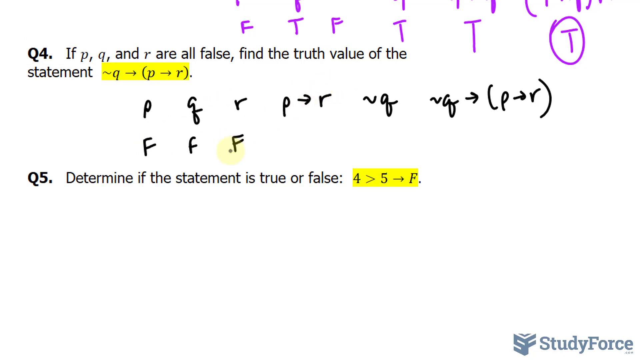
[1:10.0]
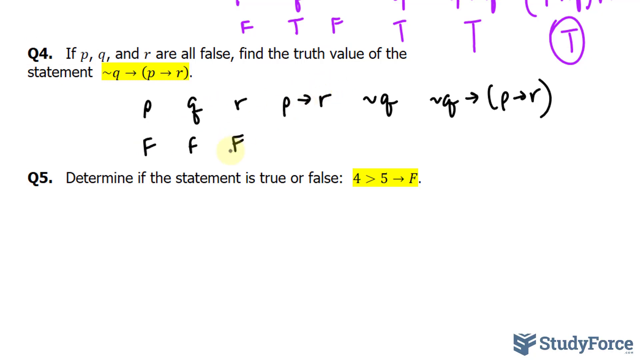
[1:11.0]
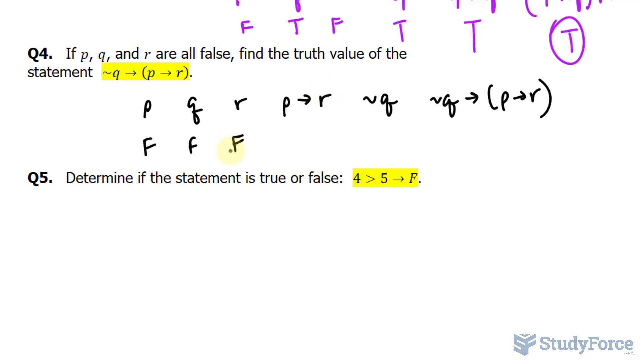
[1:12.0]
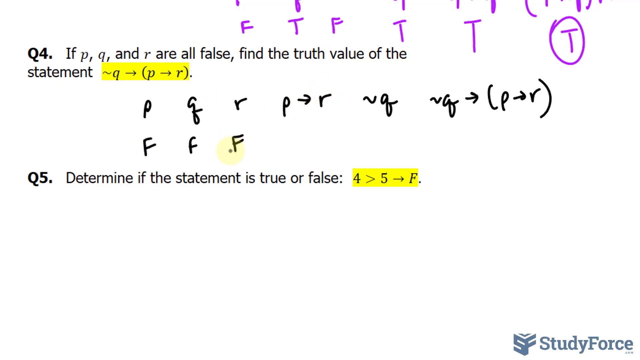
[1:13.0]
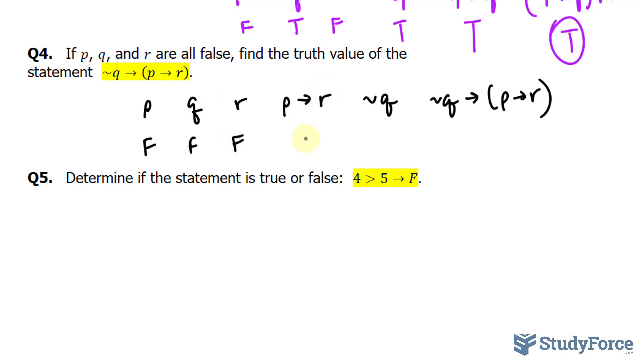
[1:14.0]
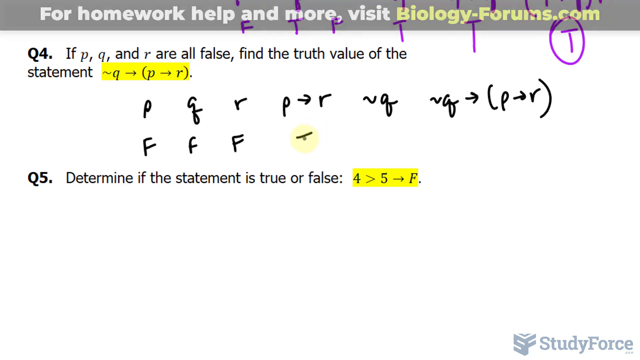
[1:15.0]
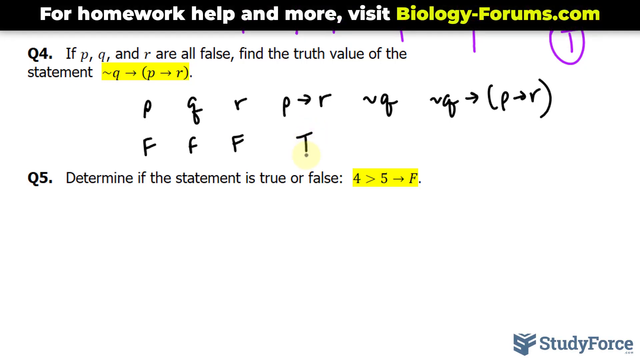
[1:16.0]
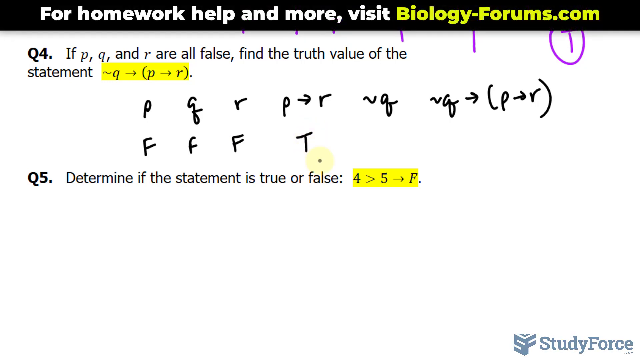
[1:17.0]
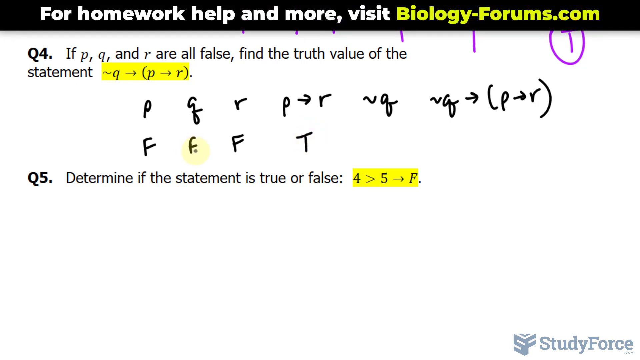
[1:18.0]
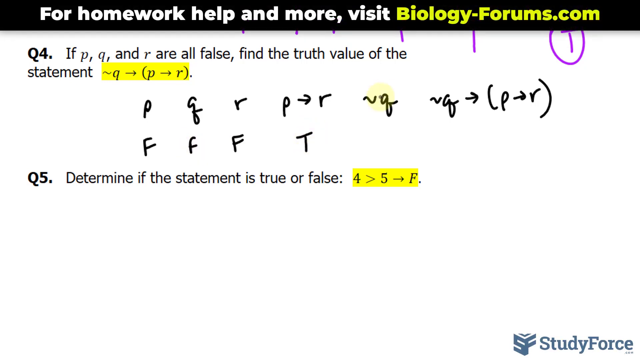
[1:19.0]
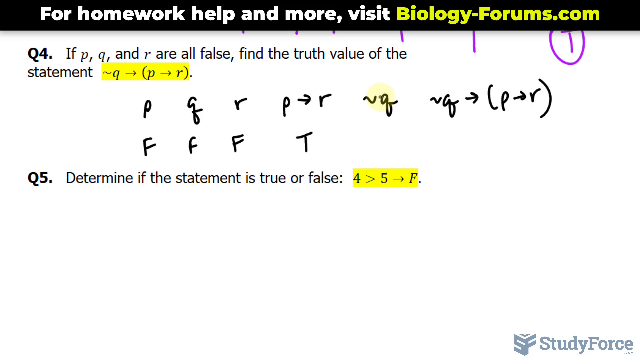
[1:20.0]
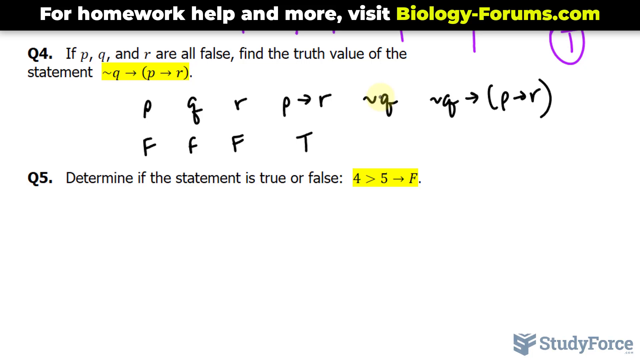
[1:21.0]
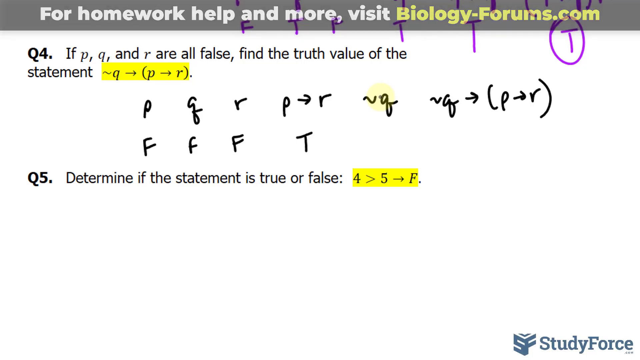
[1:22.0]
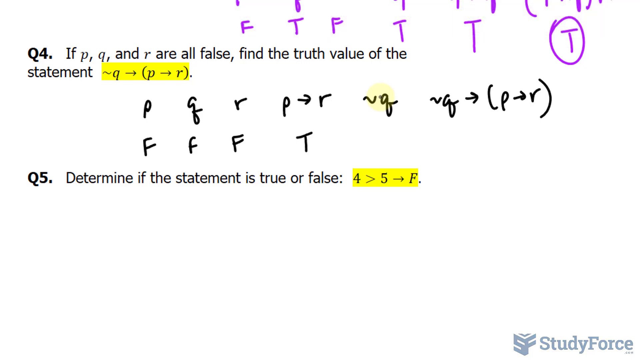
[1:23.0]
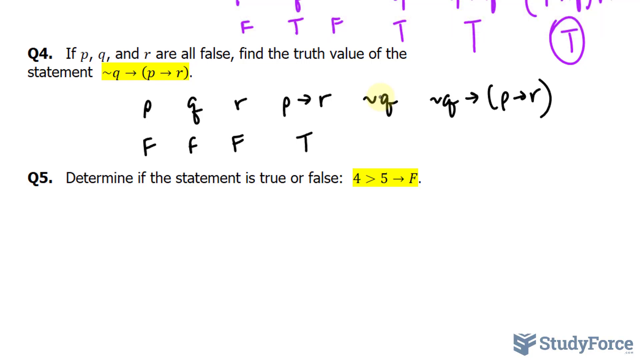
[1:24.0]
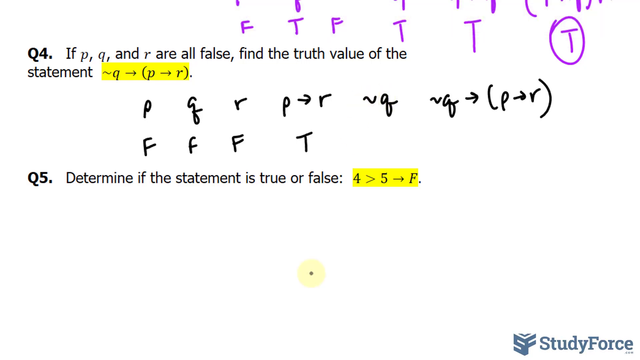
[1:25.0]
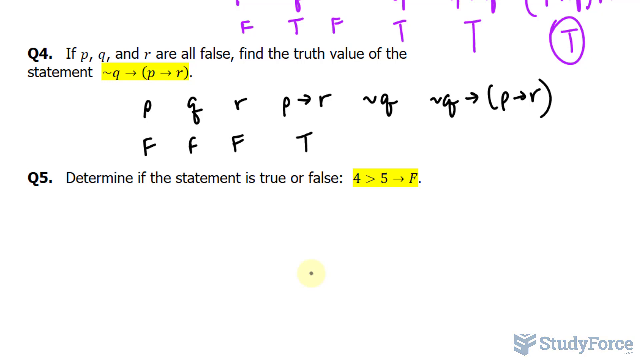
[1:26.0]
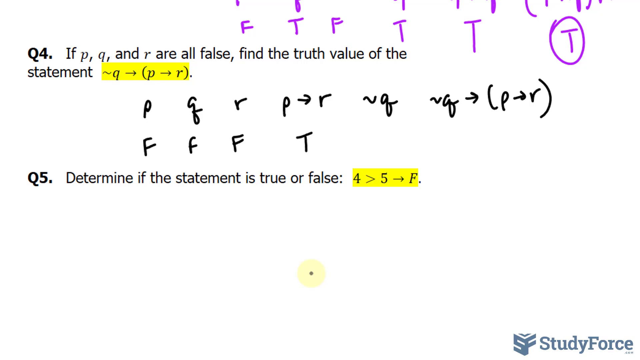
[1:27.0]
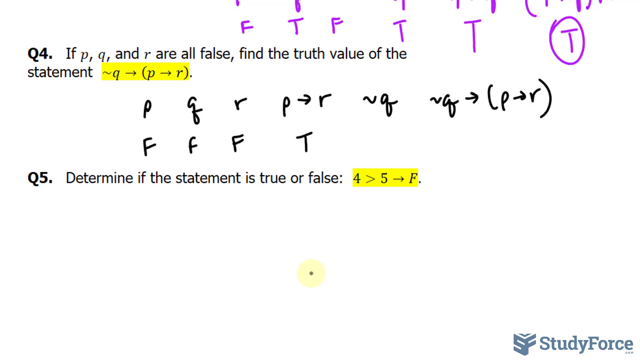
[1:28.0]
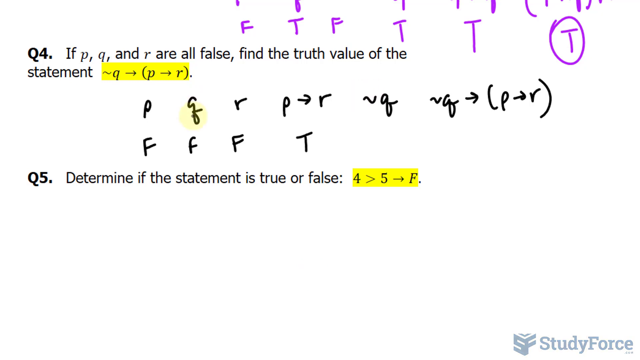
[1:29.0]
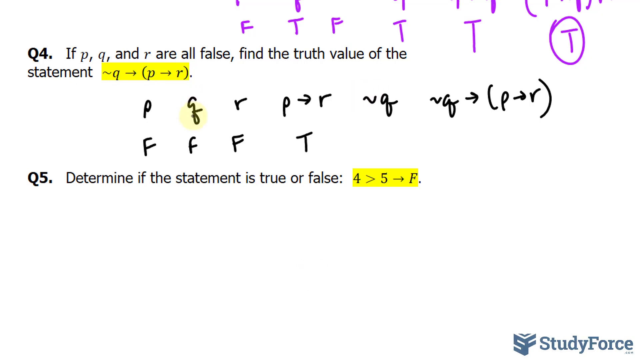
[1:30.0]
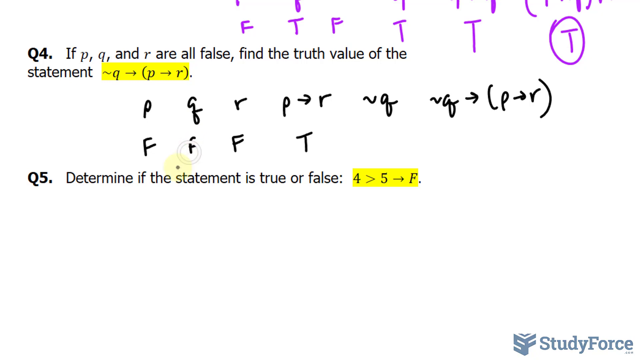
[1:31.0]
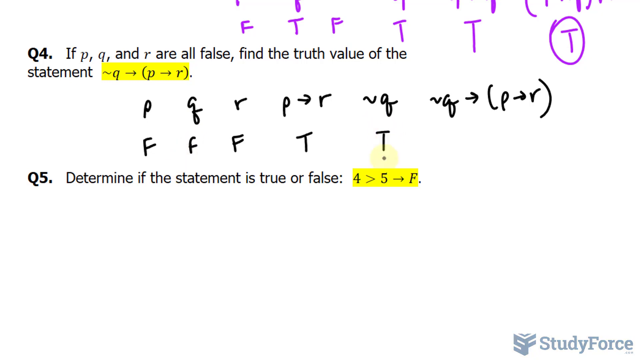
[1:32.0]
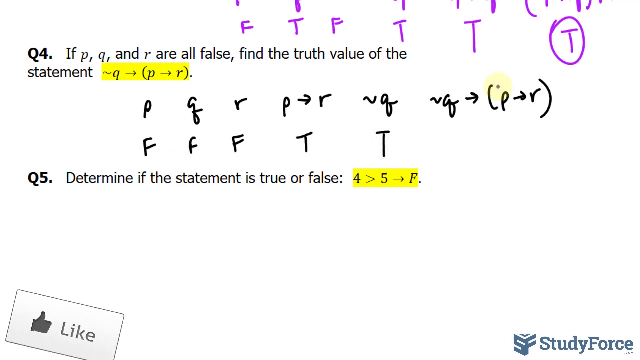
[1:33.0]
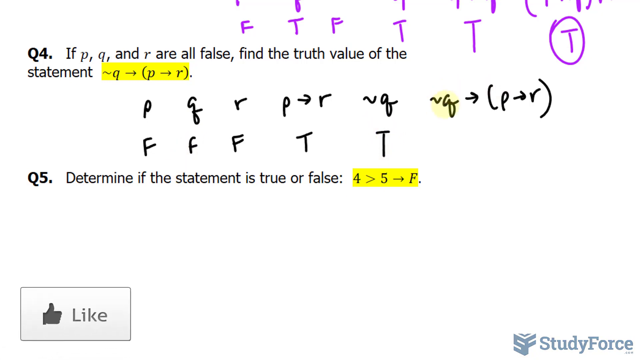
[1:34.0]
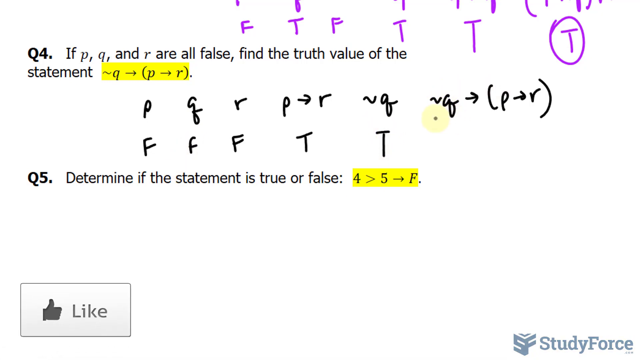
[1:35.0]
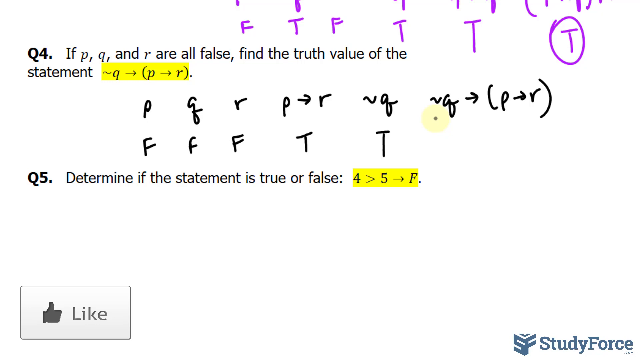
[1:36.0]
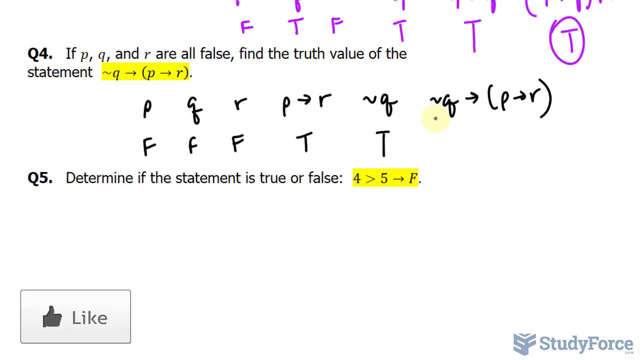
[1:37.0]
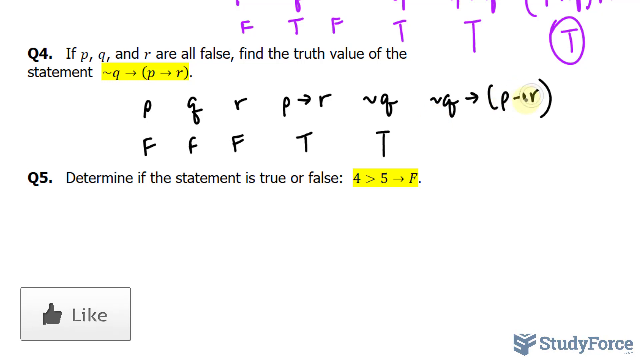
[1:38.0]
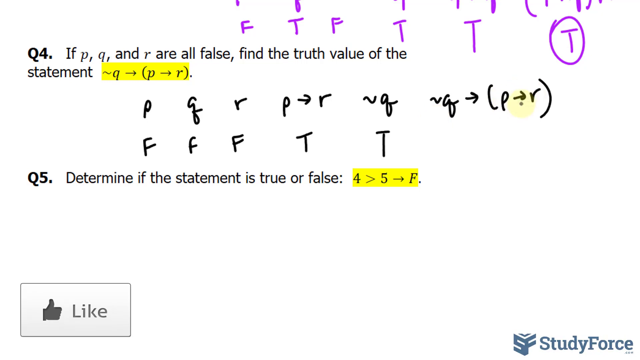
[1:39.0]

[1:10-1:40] The cursor moves from a starting position slightly to the left toward the center of the frame, writing some characters in black. At the top of the page a black banner appears containing a sentence, with some words written in white and others in lime color. Moving with very fluid and clear movements, the cursor writes another character, a capital T, in the white space between Q4 and Q5. As it does so, a small rectangular banner appears at the bottom of the screen, containing a thumb icon on a white background and having a very thin dark edge. In the upper part of the screen there are some purple letters, some of which are circled.